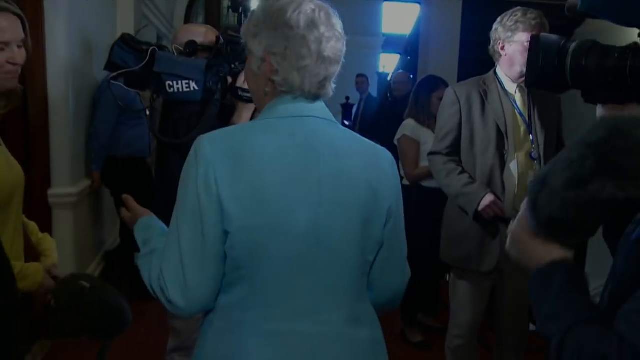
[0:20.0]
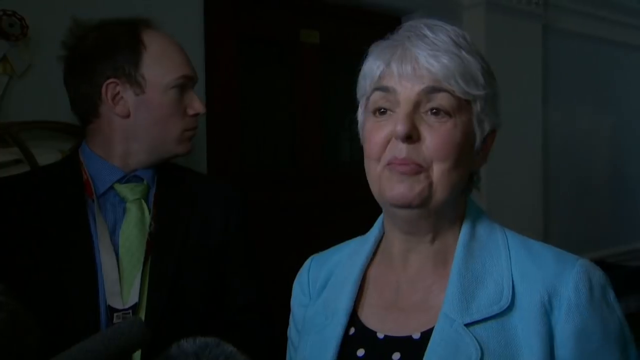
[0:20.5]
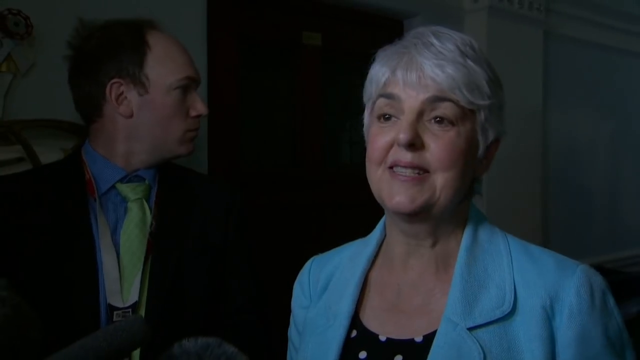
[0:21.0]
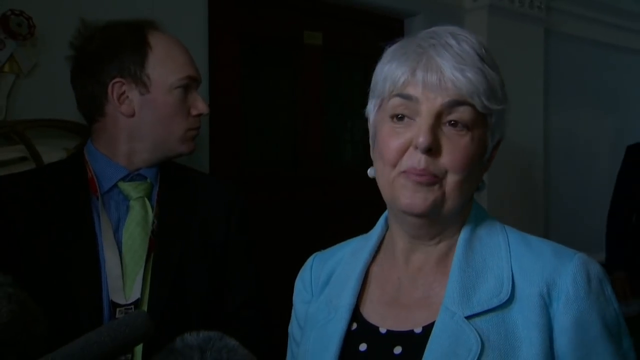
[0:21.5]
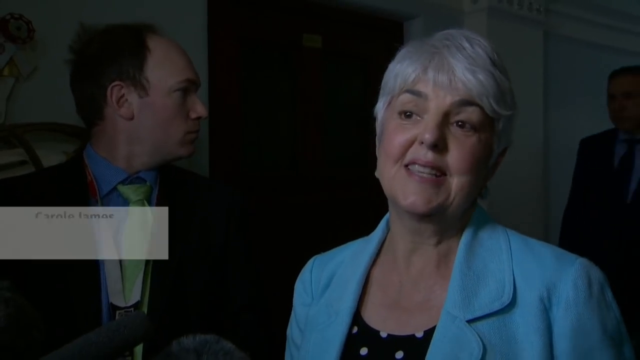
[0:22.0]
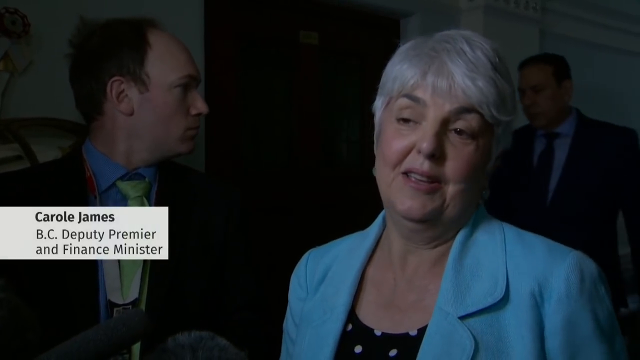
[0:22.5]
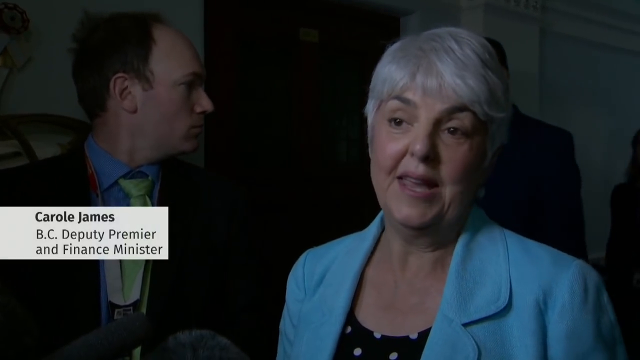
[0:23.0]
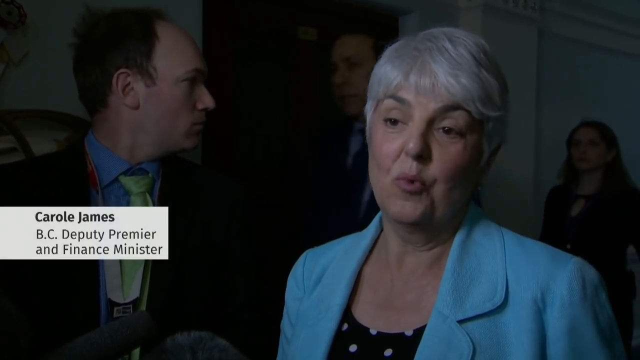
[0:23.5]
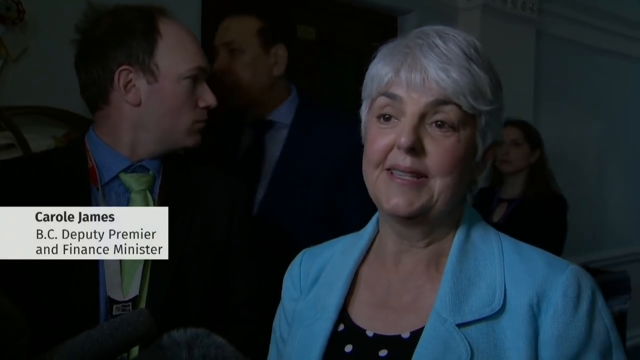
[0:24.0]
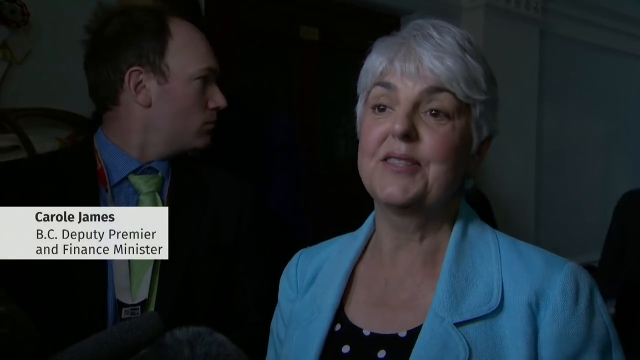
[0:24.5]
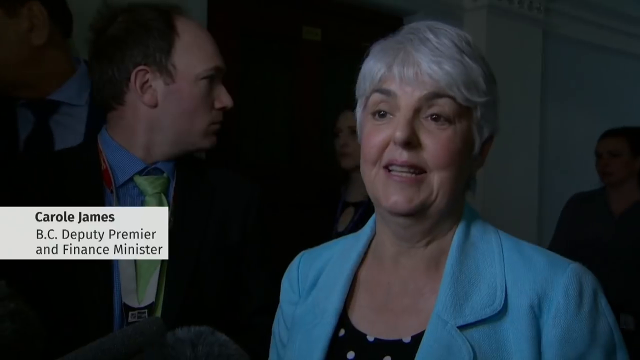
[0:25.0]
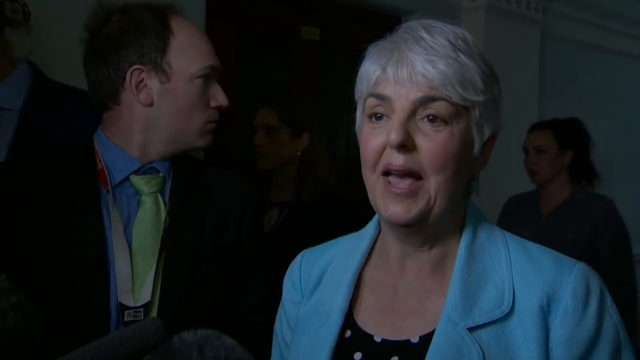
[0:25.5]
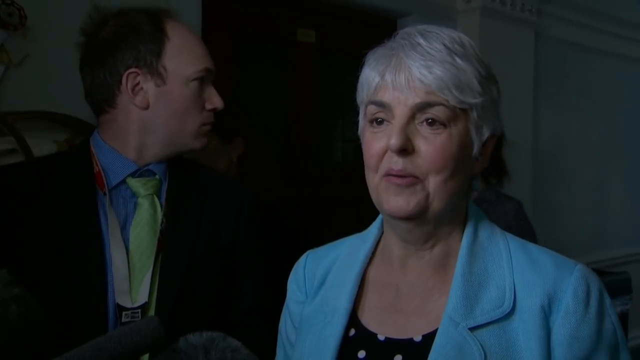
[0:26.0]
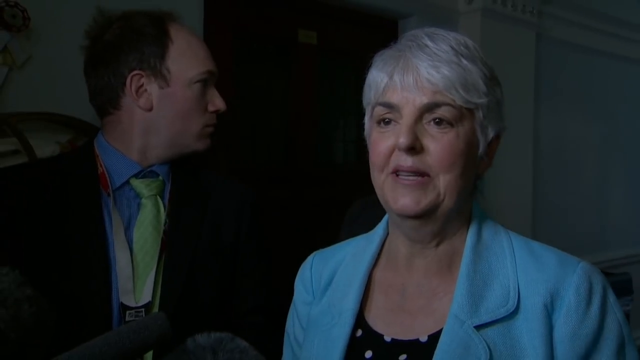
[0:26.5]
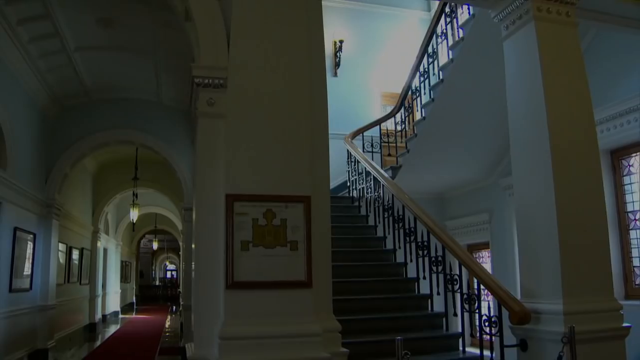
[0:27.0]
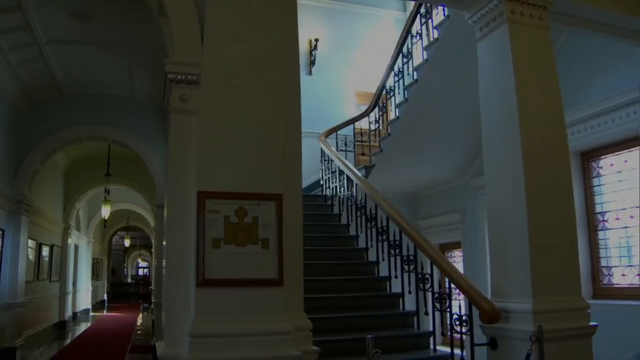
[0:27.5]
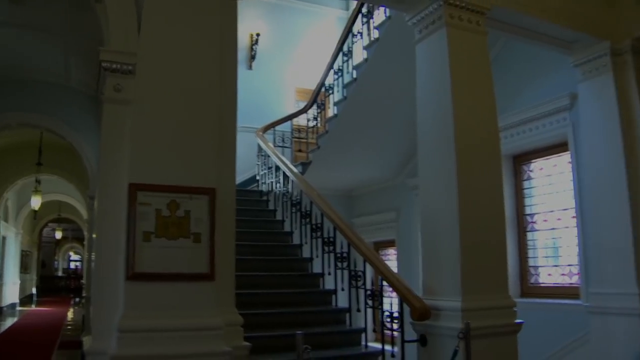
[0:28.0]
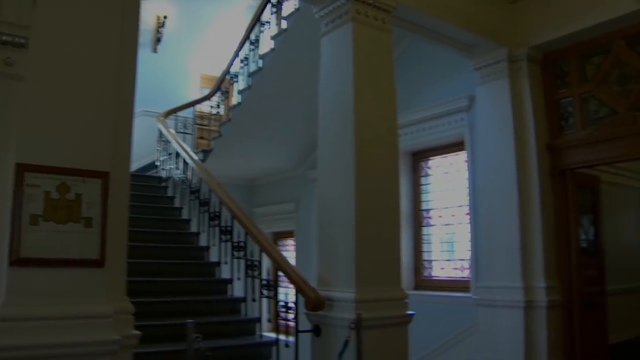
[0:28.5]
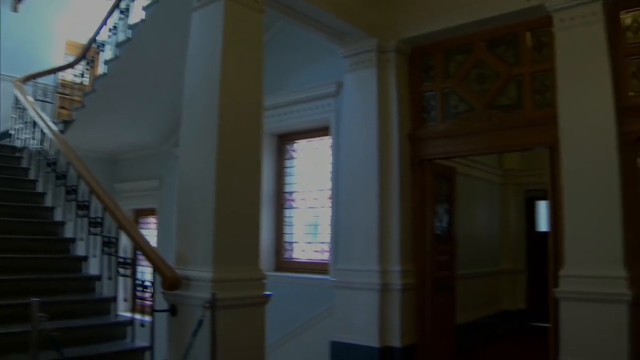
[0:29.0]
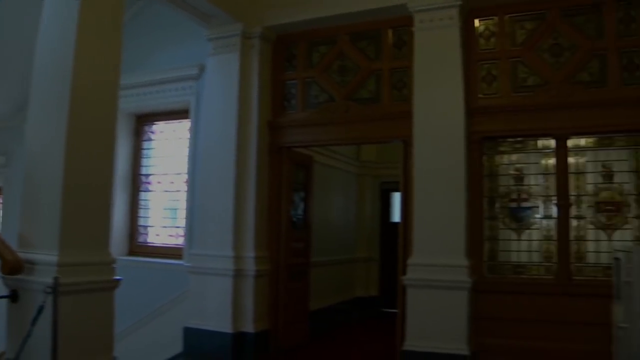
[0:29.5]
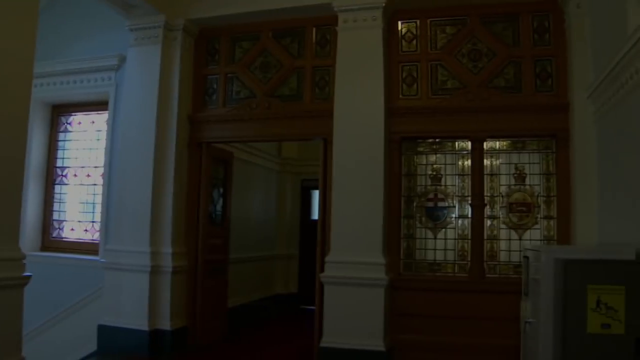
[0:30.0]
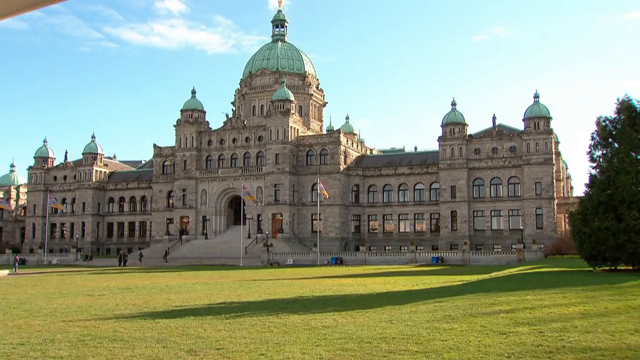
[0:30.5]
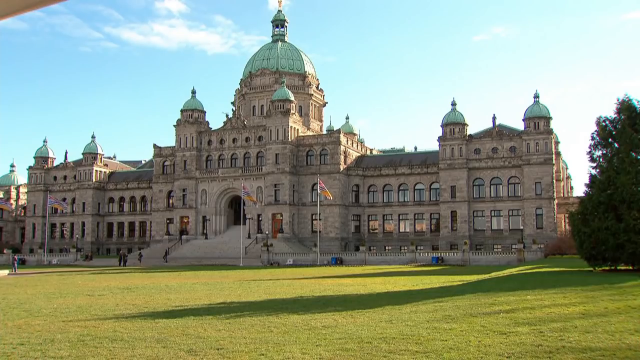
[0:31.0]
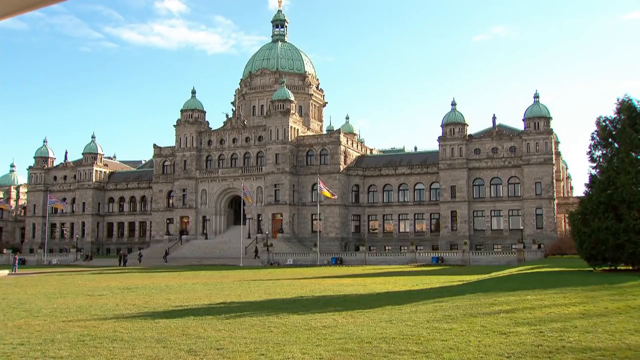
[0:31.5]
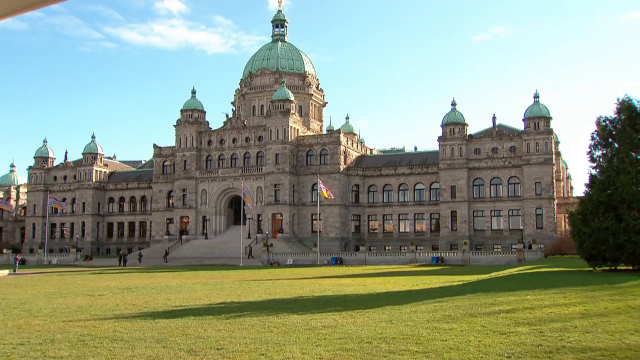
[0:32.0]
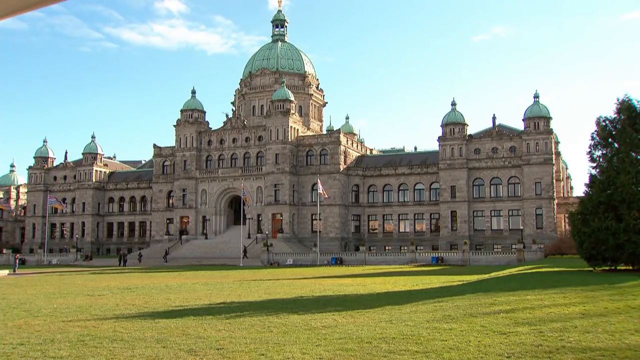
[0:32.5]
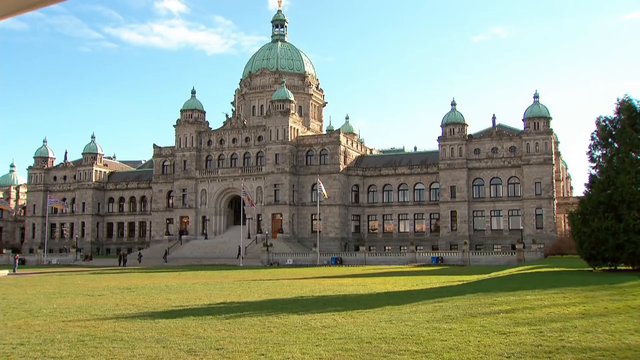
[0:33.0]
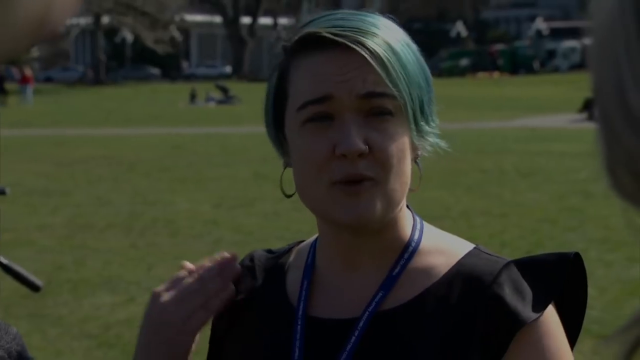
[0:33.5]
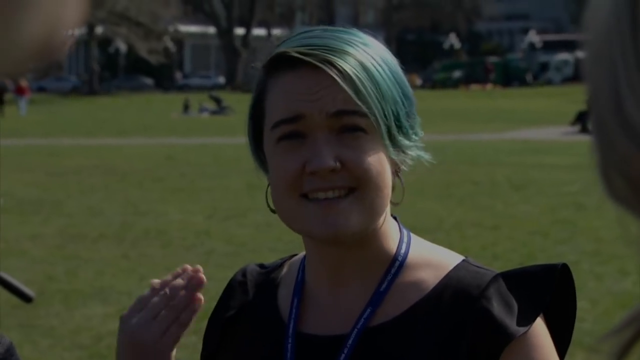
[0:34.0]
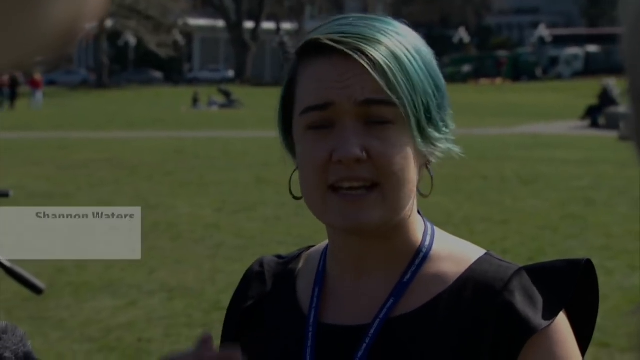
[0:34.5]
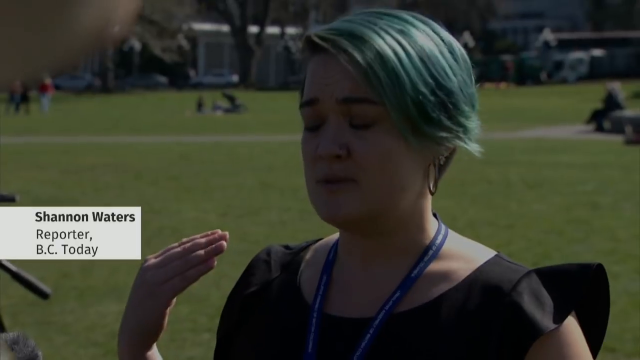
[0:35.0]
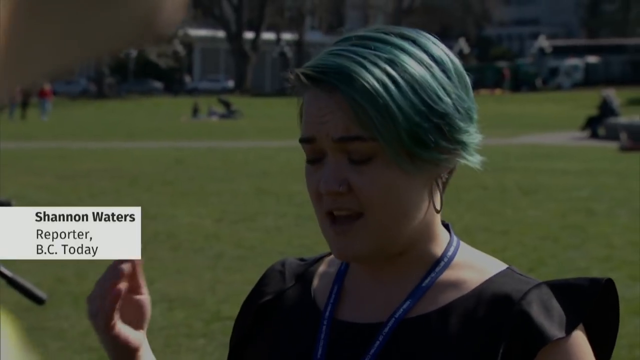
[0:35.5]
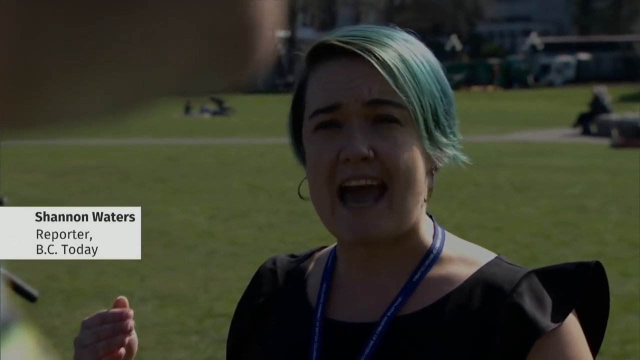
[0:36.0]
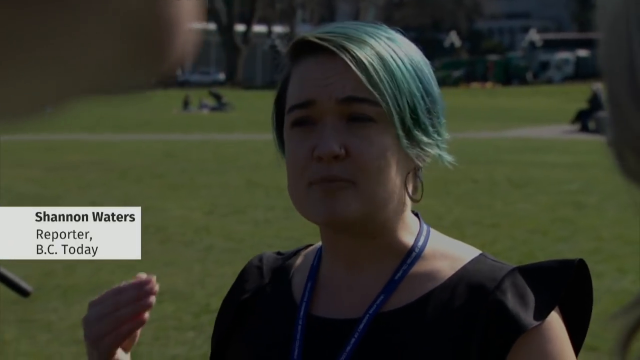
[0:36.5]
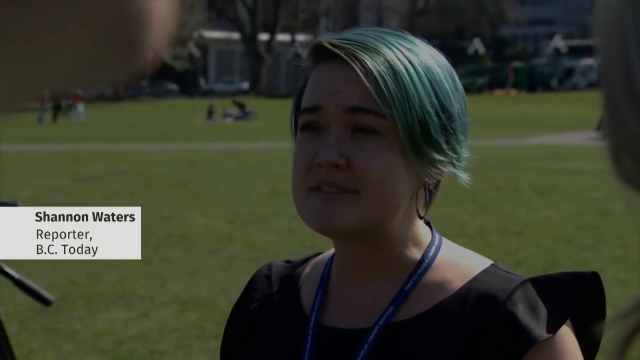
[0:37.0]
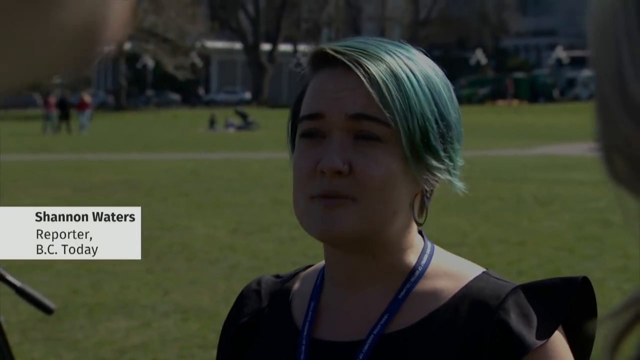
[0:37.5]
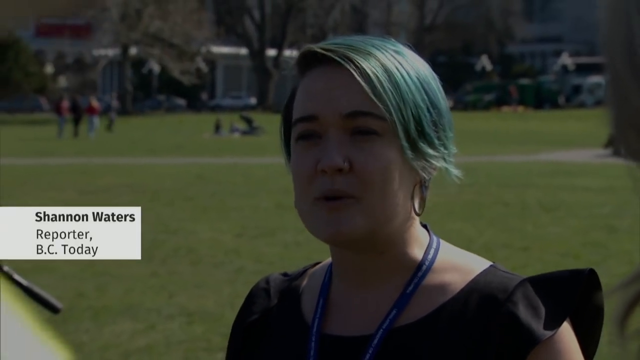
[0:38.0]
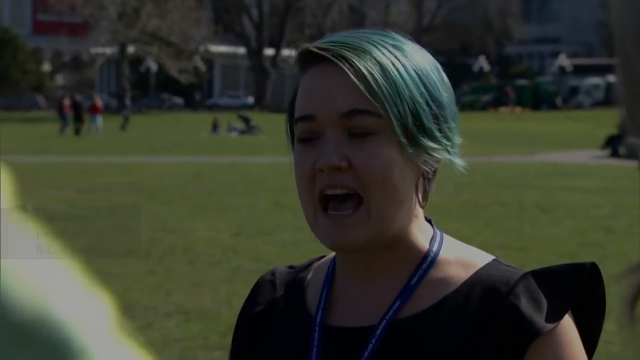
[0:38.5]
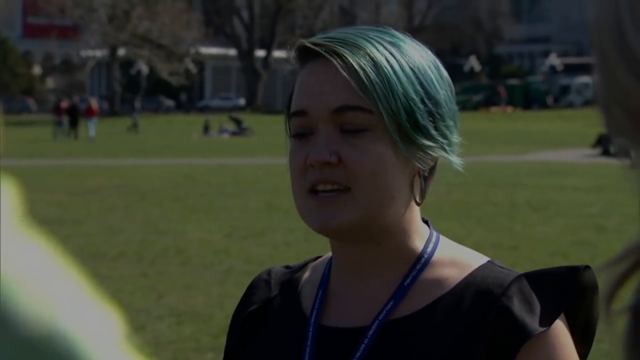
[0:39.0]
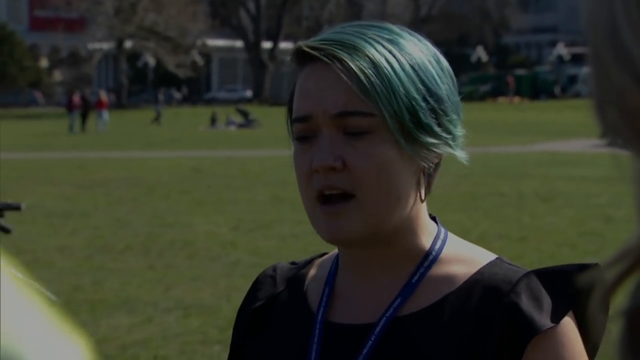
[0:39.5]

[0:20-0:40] An old white woman with short gray hair and a light blue blazer walks through a corridor full of people, some with big video cameras, speaking to another woman as she passes by. The video cuts to her speaking to a reporter with a man behind her, while a caption reads "Carole James BC deputy premier and finance minister"; she keeps speaking, moving her lips and her head a bit. Next, the camera pans down from left to right, showing a corridor, then some stairs and two wooden doors. The video then cuts to a big gray building with water-green cupolas that looks like a castle, with some flags on it and well-maintained green grass. After that, a white woman with green hair in the middle of the screen talks and moves her hands; she is Shannon Waters, a reporter for BC Today.